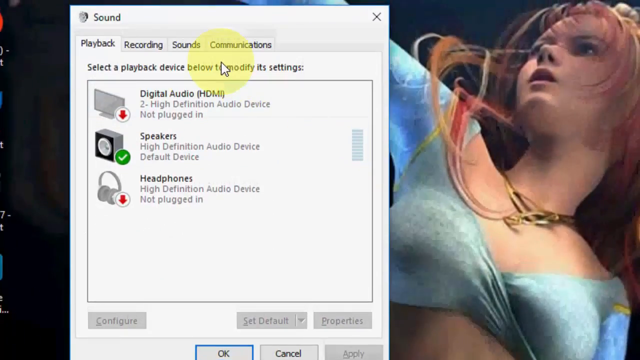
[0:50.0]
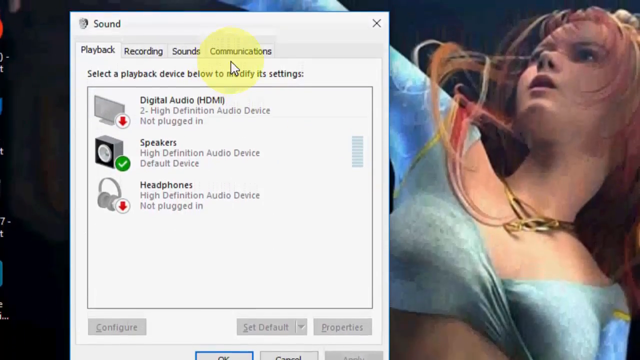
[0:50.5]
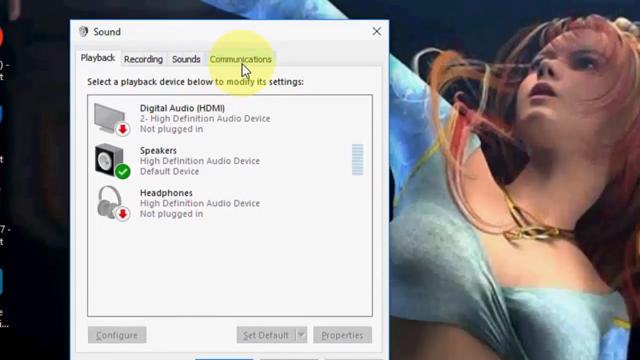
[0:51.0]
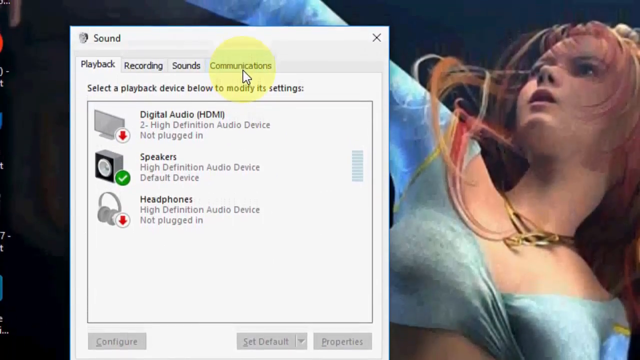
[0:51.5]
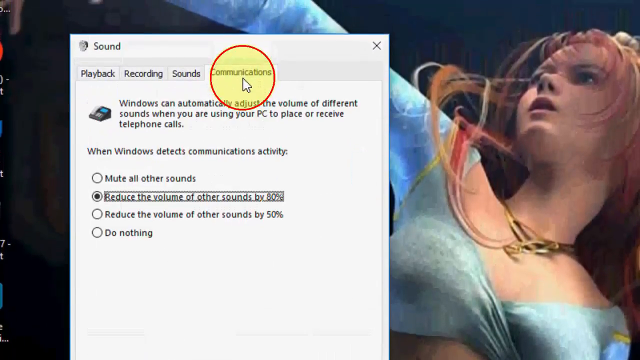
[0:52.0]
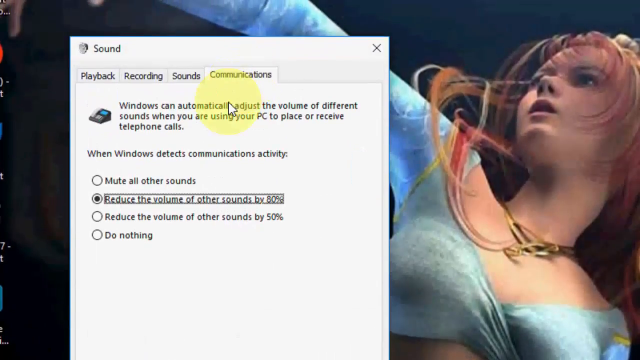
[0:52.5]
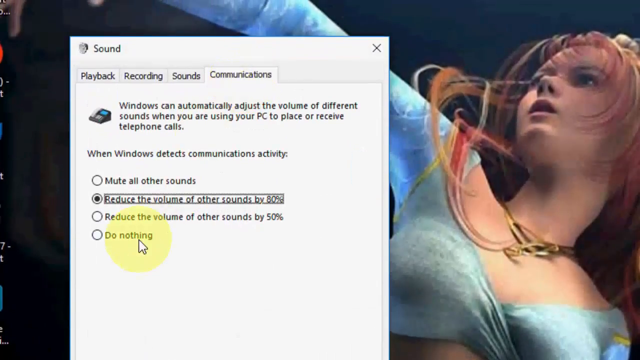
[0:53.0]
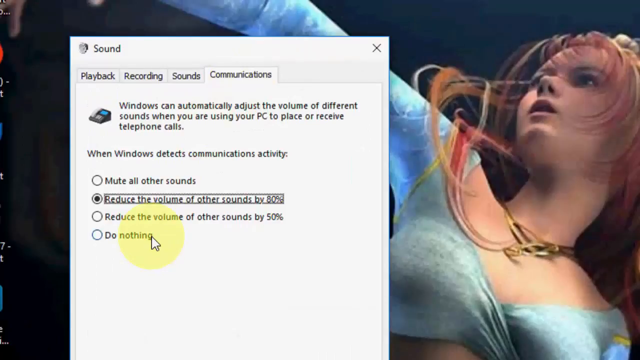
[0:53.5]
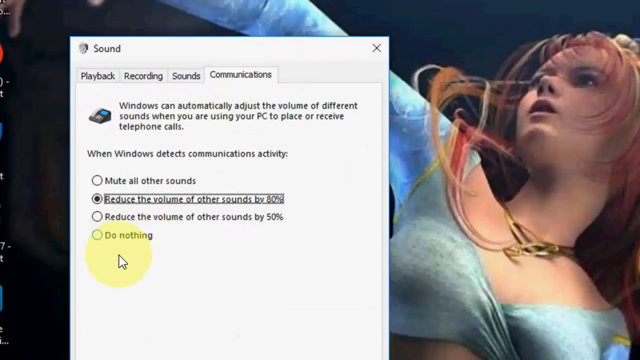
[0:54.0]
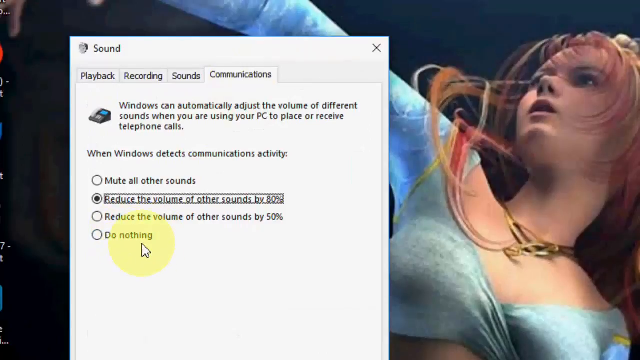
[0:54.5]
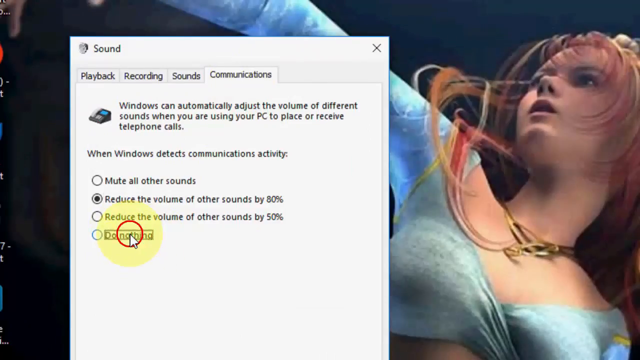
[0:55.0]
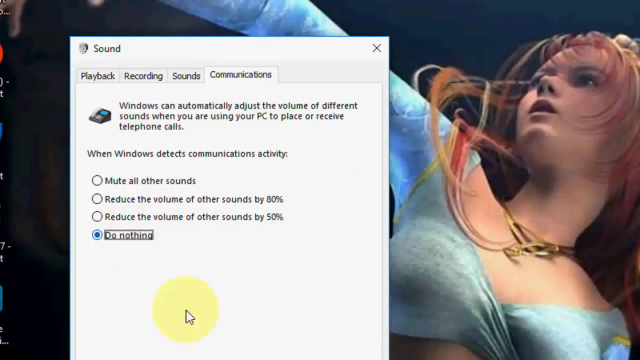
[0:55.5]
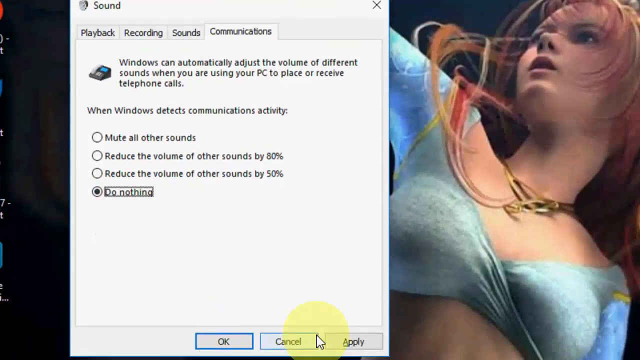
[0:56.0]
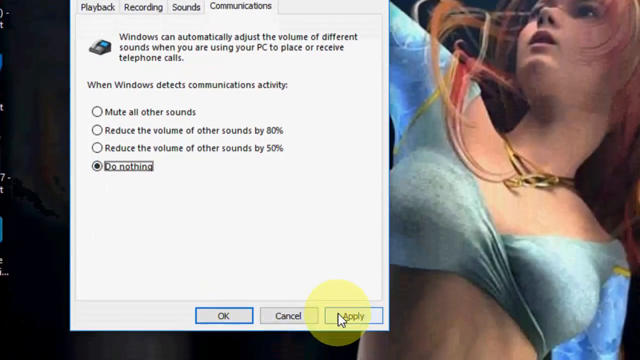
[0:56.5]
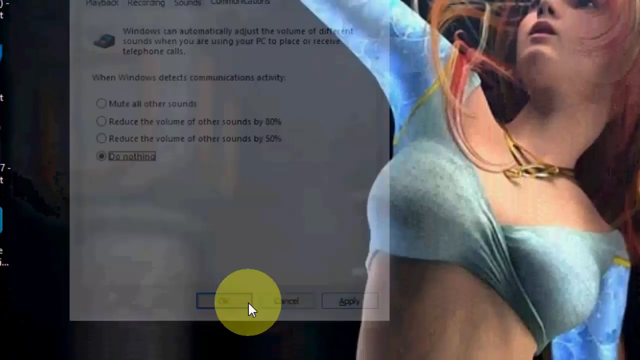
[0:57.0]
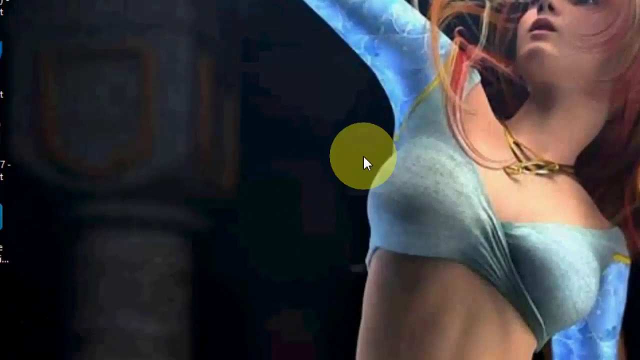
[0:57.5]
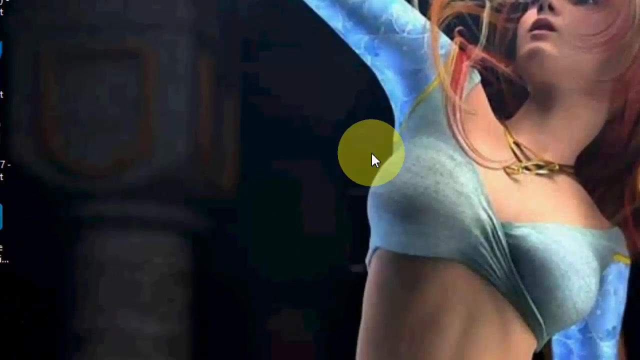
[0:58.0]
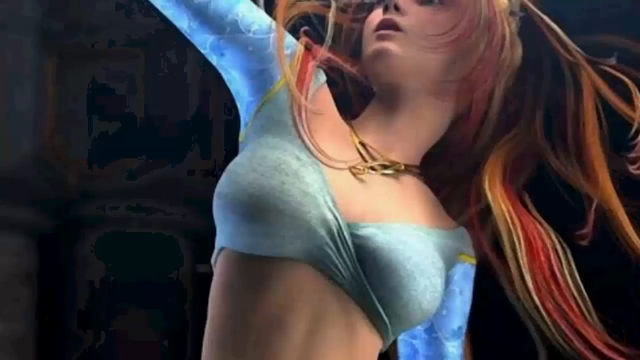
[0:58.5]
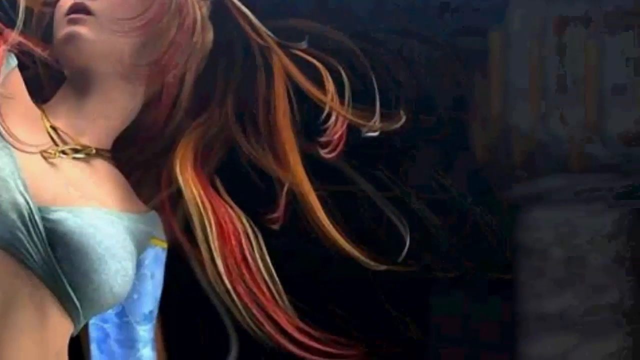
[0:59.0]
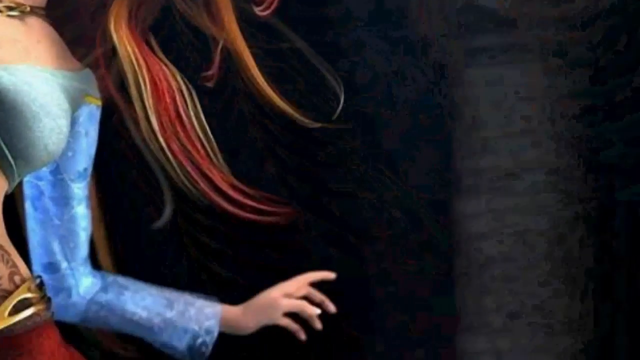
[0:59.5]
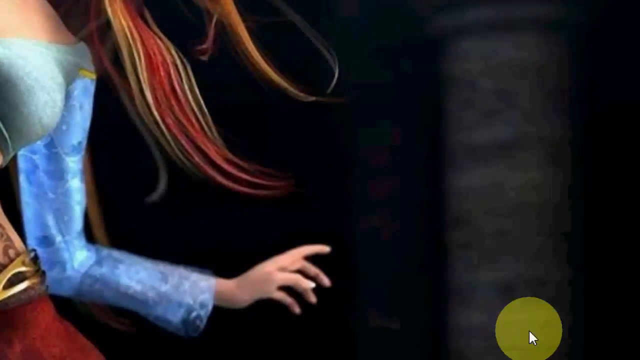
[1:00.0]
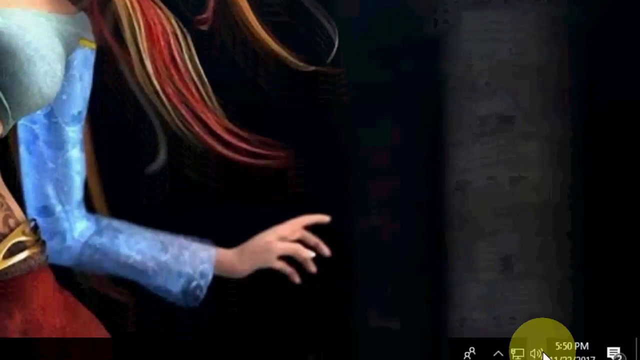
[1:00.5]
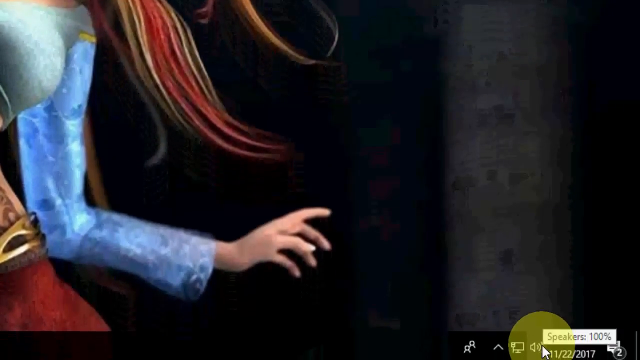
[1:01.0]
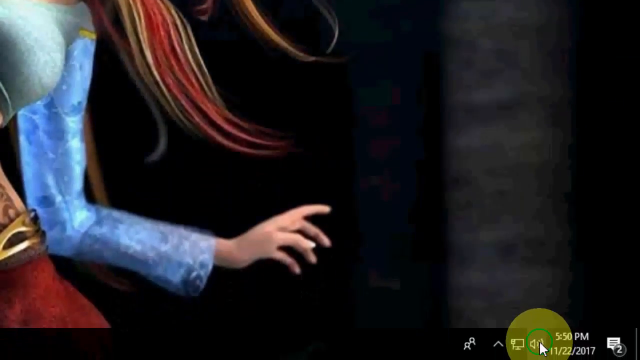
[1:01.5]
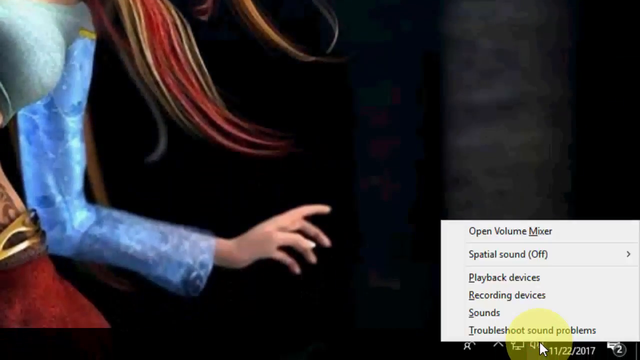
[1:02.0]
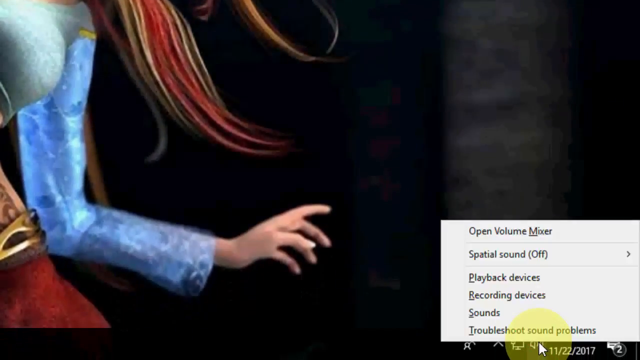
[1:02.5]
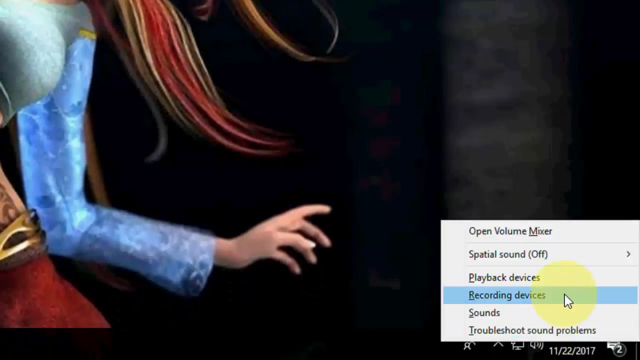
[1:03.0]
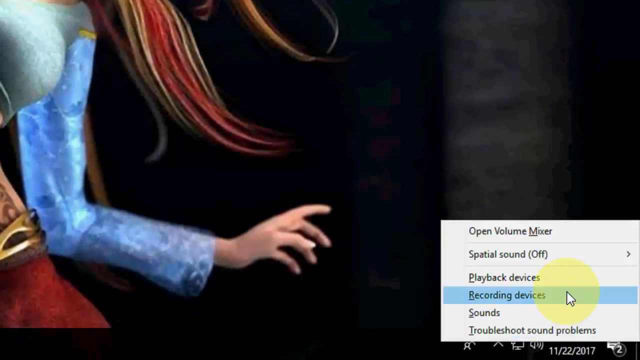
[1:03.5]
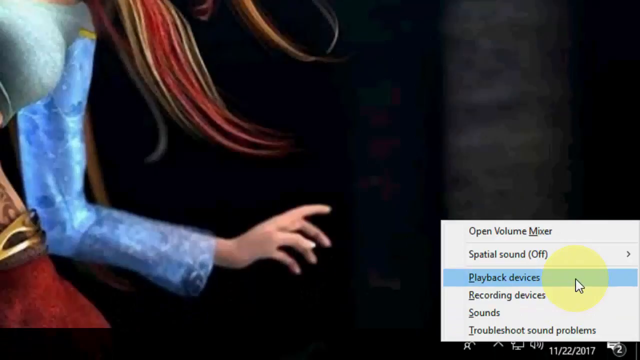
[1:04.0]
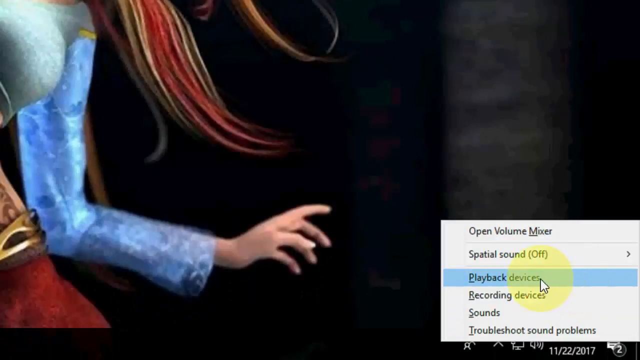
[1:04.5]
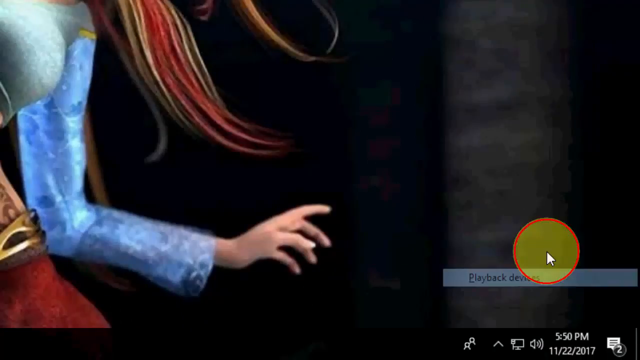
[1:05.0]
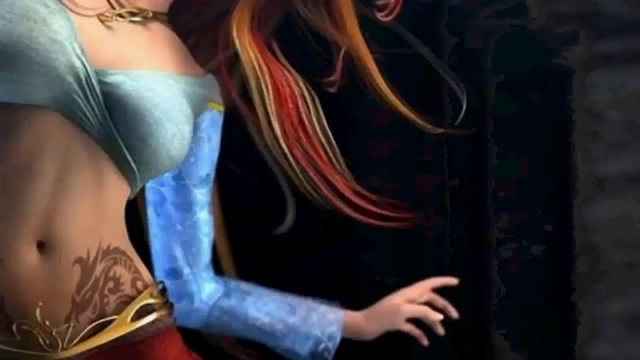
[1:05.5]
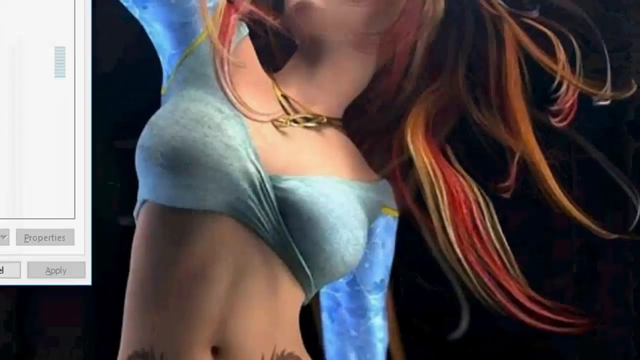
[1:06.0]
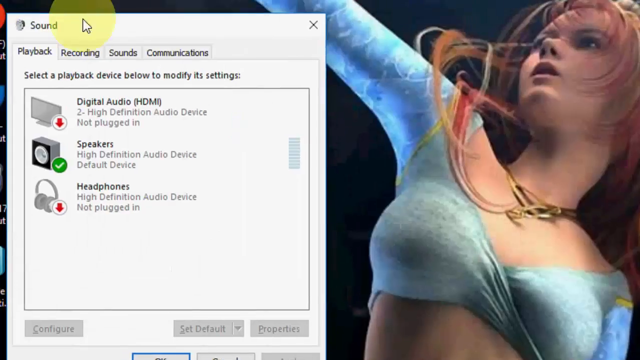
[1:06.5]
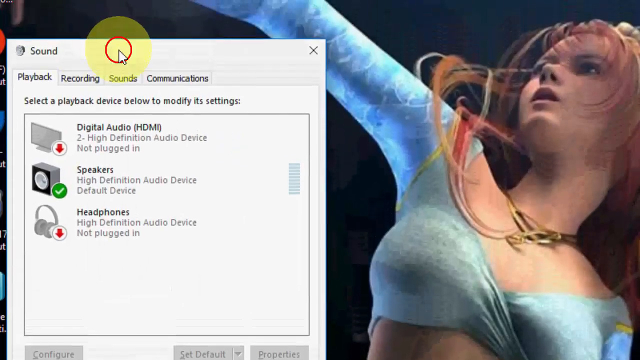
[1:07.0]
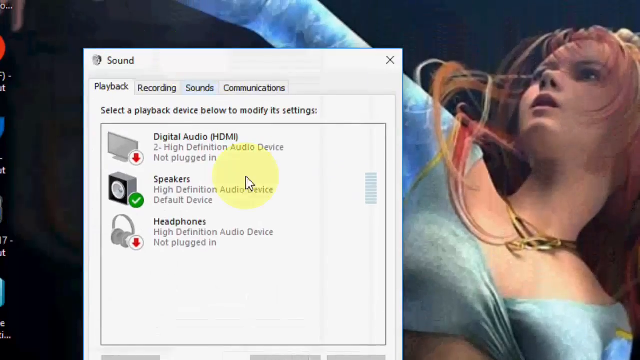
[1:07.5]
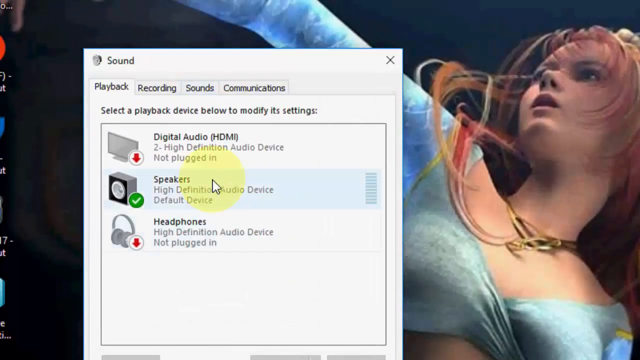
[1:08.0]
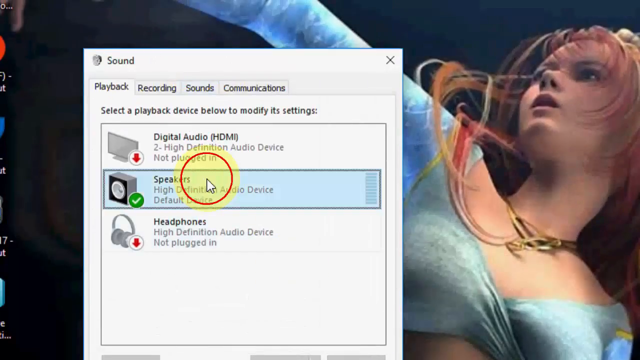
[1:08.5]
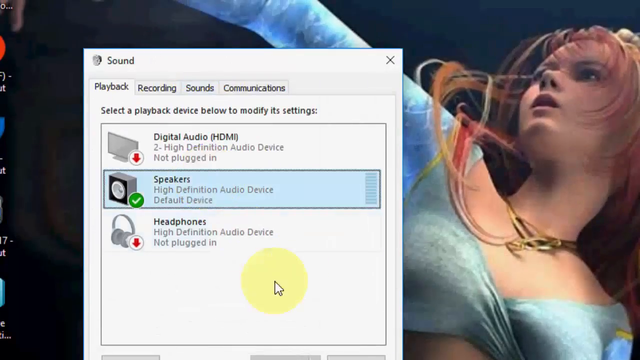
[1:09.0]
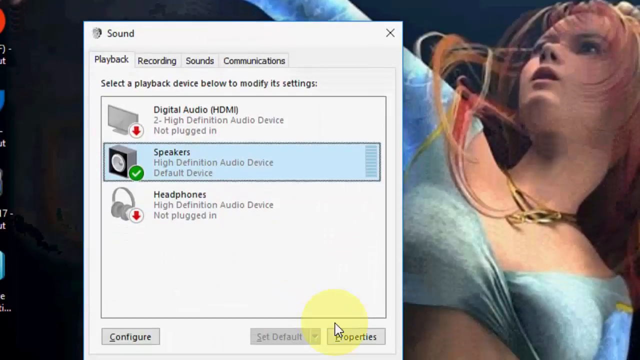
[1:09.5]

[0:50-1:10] A desktop is shown, its wallpaper an animated red-headed dancer wearing a teal blue top with long, shiny blue sleeves and a gold necklace. The sound properties window is open, and the mouse cursor on the screen has a yellow blob around it to show where it is. The person is in the playback settings, then switches to the communication settings, marks "do nothing", hits apply and closes the window. They move around the desktop, click on a menu and hit playback, open sound again, and go to the speakers option.